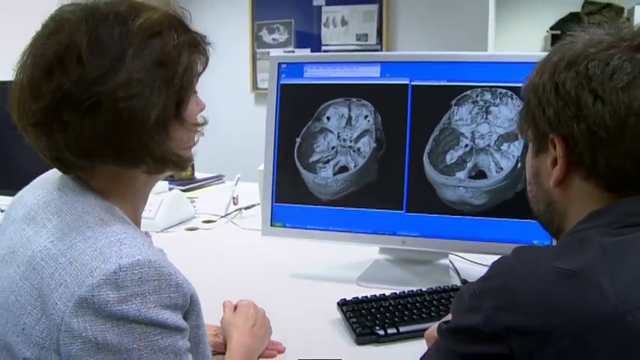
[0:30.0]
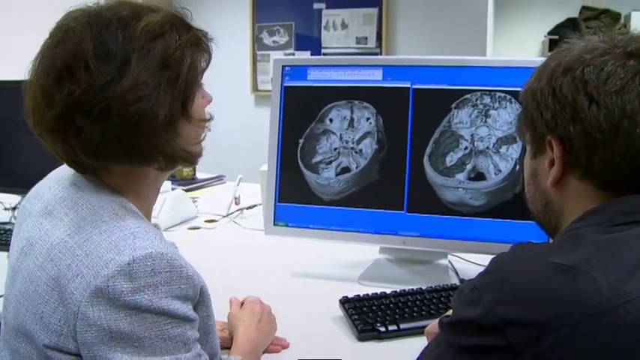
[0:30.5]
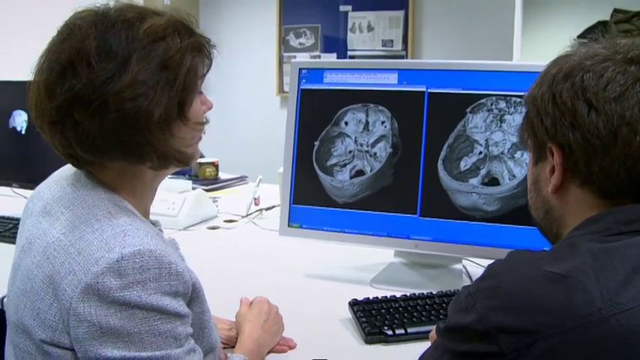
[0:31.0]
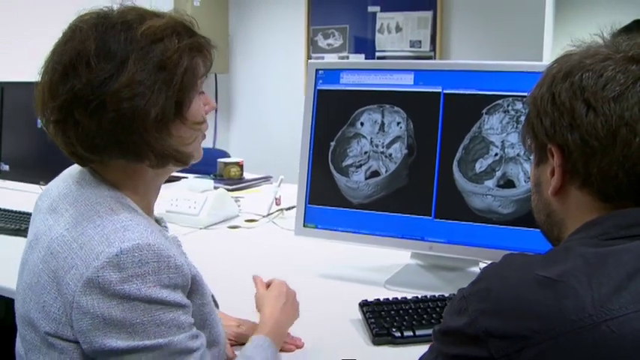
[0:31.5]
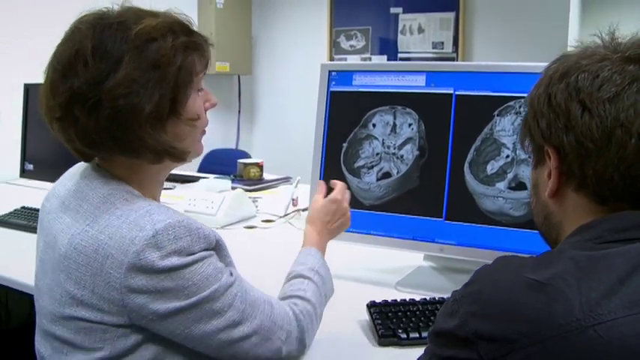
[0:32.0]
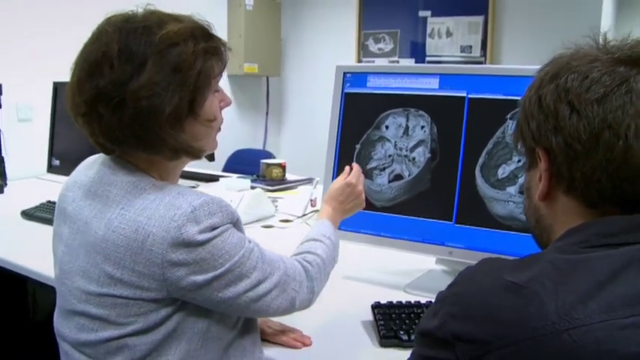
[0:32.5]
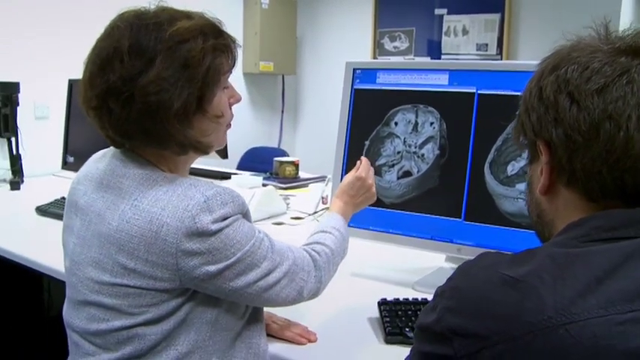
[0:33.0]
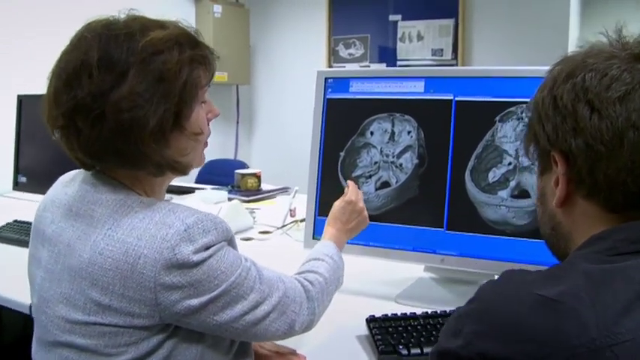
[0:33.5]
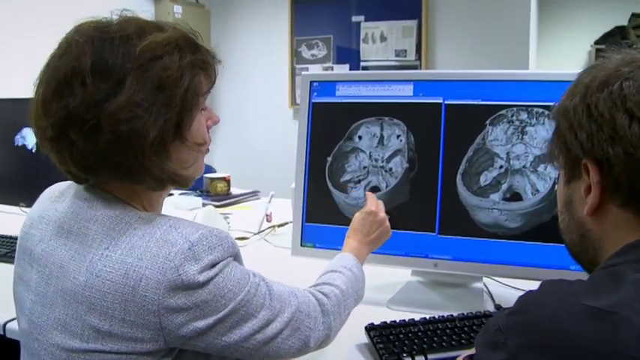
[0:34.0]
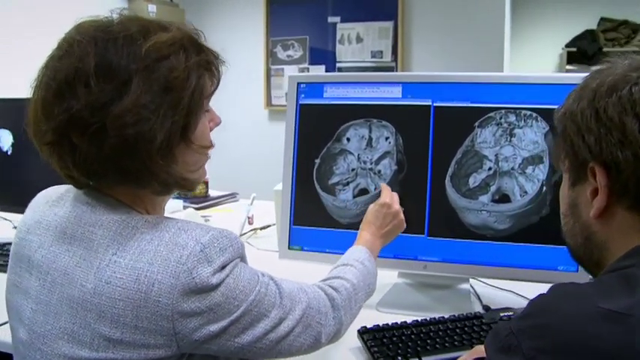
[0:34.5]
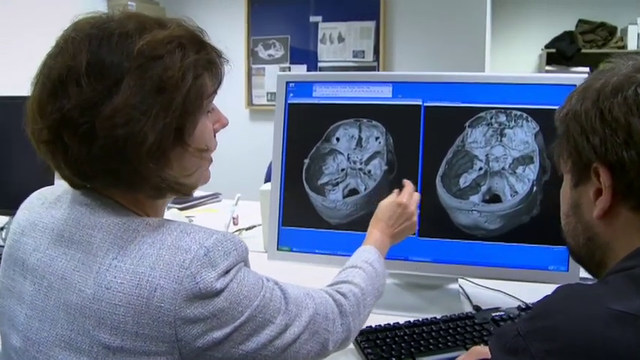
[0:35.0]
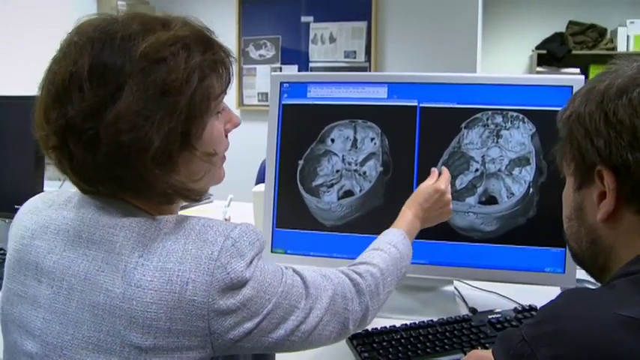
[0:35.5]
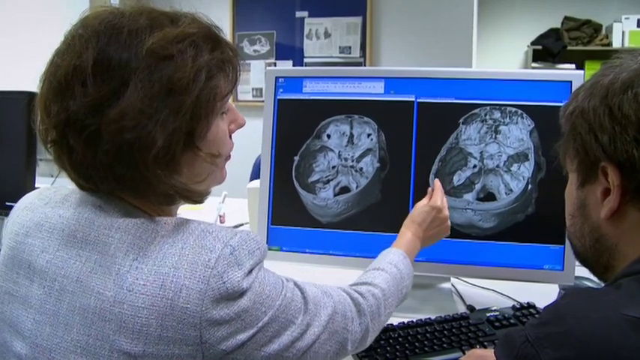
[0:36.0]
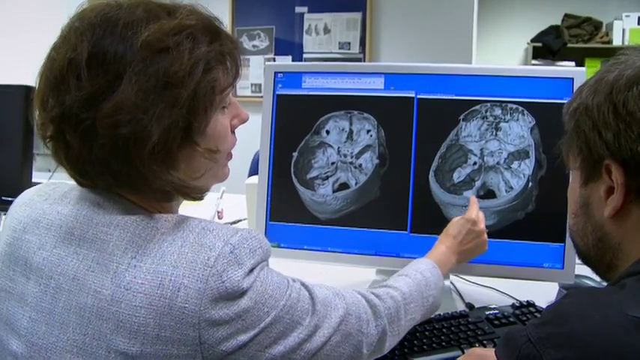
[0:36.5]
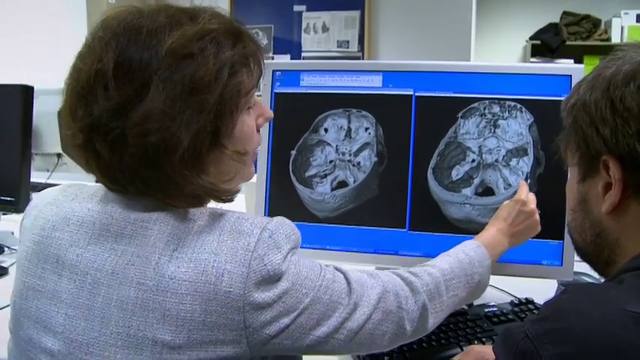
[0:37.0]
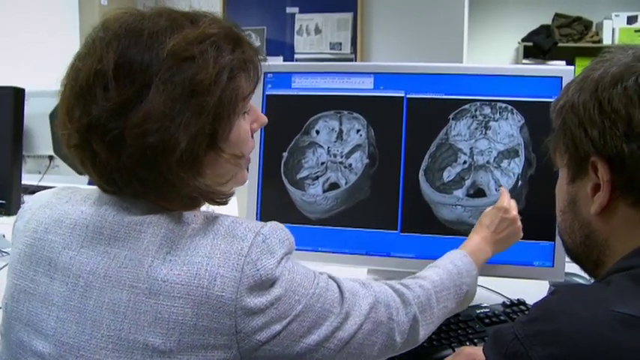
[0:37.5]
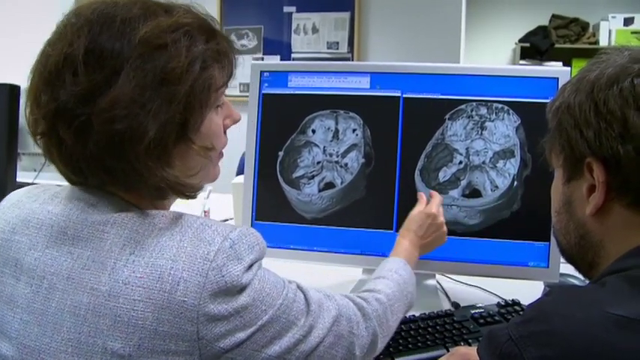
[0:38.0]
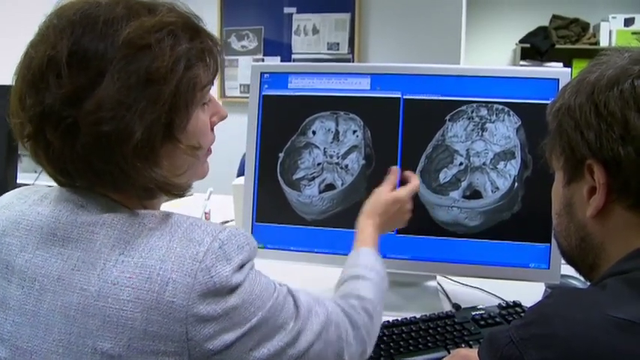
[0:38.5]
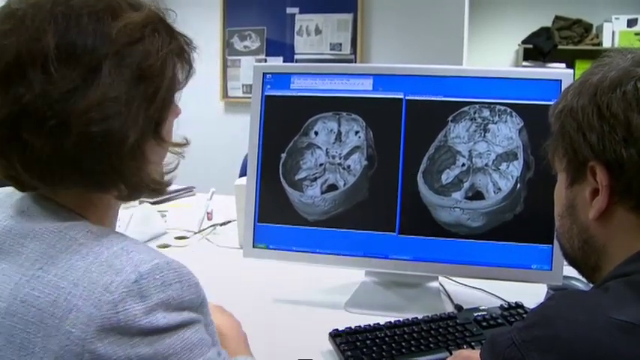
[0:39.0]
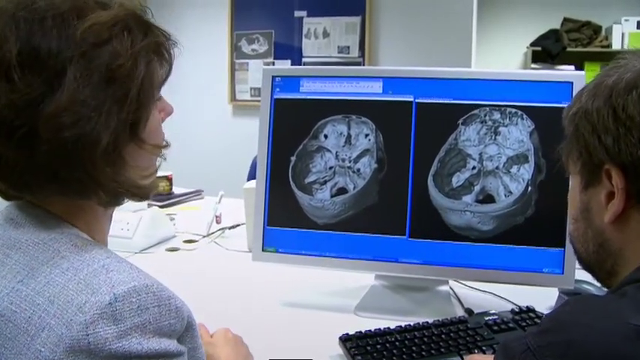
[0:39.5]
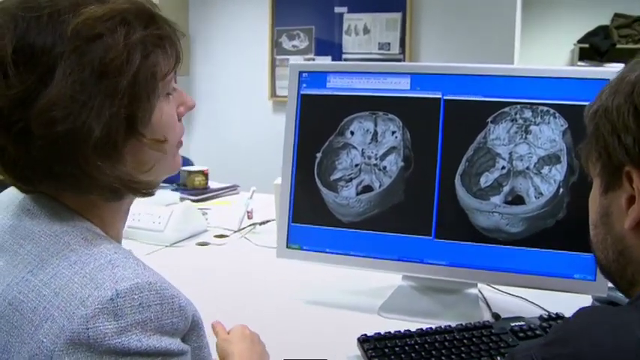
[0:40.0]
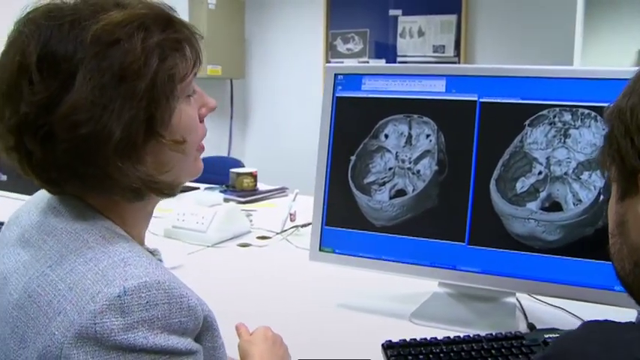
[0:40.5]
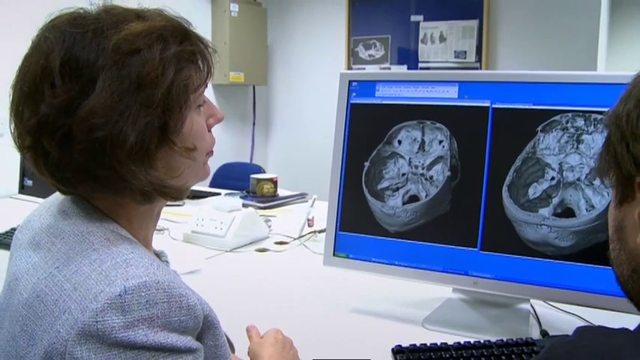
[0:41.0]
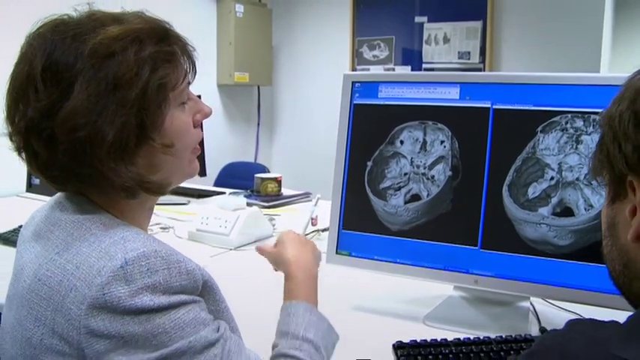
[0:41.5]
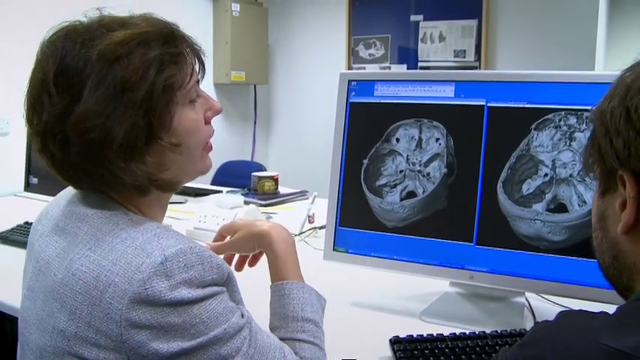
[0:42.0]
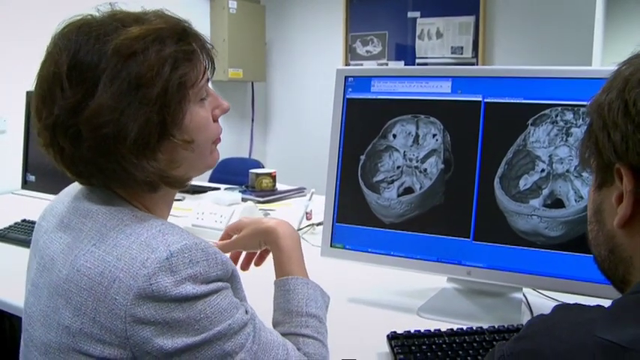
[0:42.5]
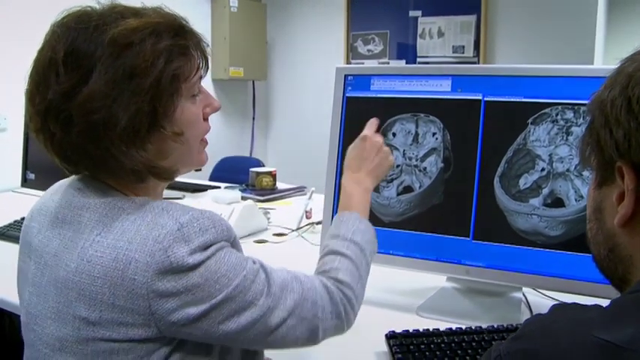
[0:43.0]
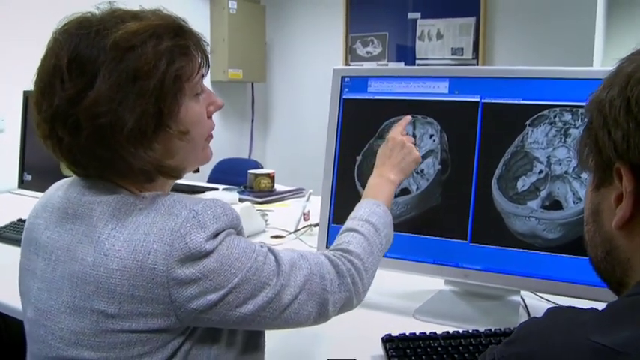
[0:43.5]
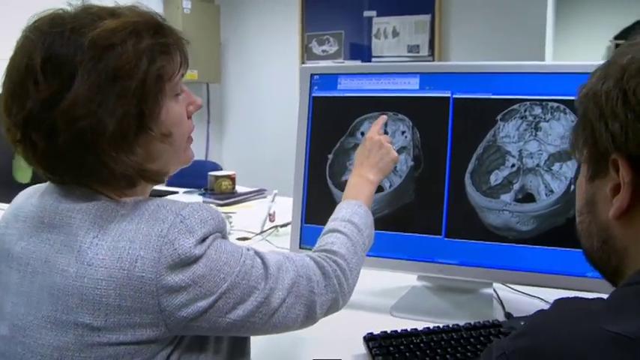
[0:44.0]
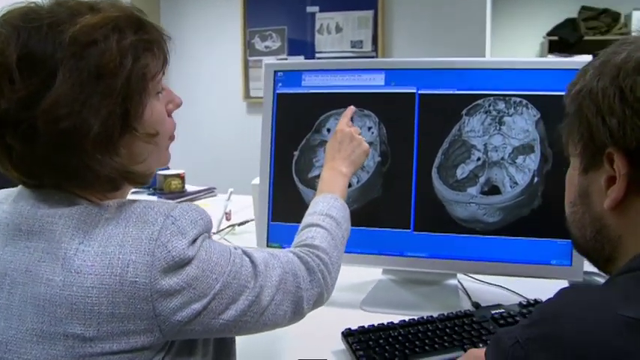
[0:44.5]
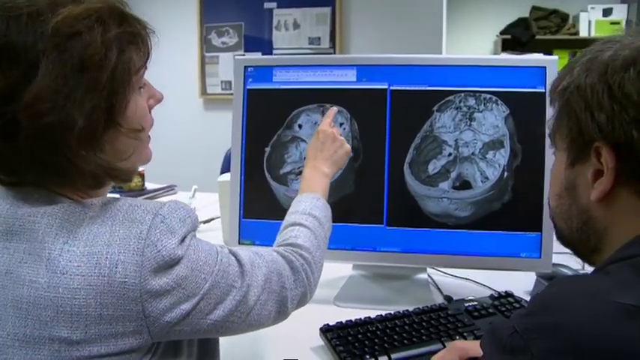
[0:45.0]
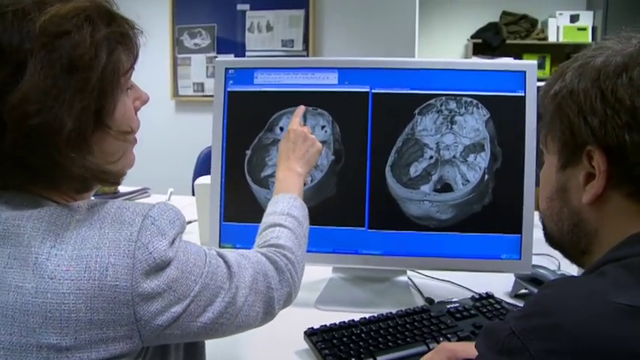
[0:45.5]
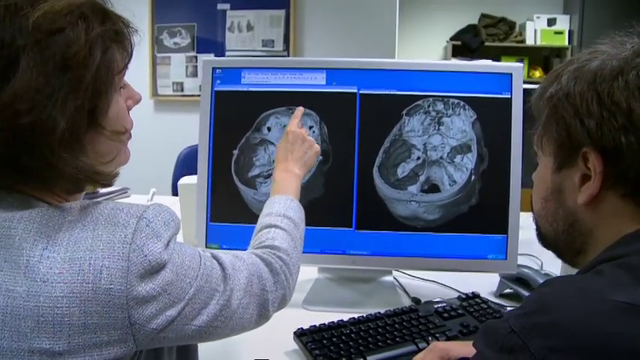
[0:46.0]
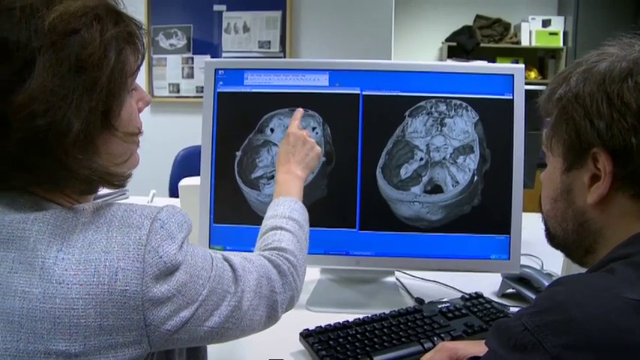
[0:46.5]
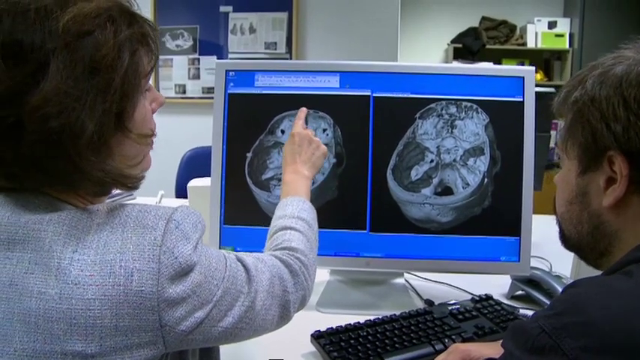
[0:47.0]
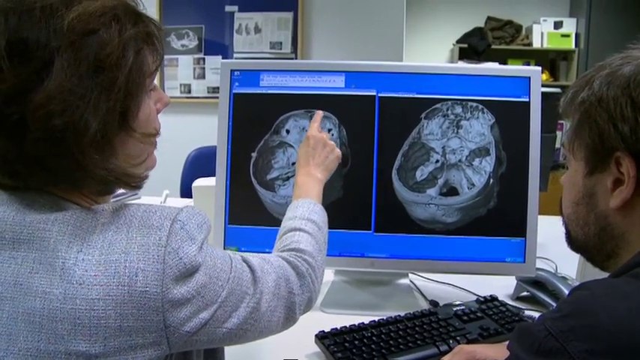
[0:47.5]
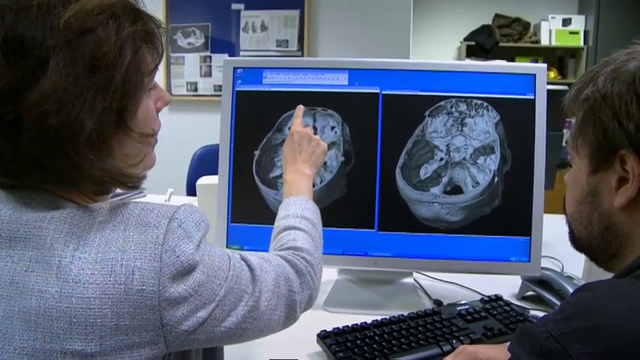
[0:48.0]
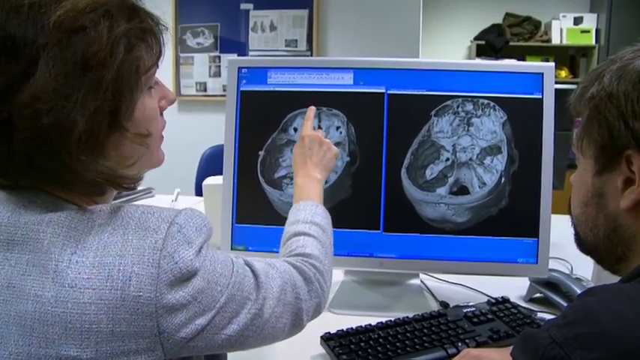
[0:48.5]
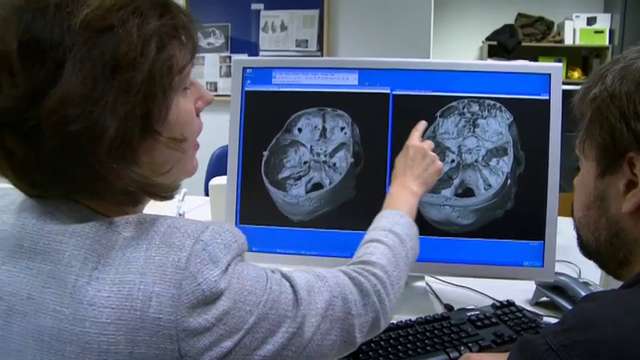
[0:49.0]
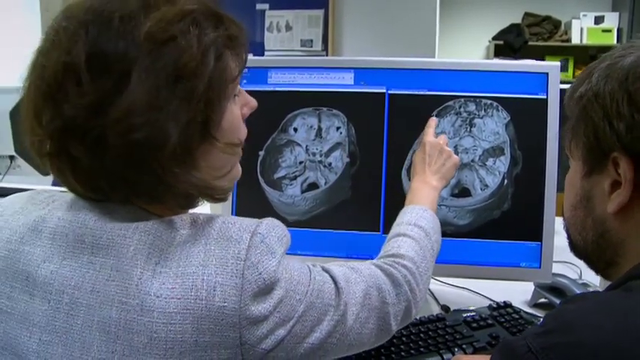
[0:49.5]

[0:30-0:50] The two people are still looking at the 3D images on the computer screen. The woman traces the shapes on the left side and the right side with her fingers as the man looks at her. She then points to the top, appearing to compare the images as she points to the top left side of one and then to the top left side of the other. The computer screen shows a blue background with two square images side by side that look very similar to one another. Both people are looking at the screen the entire time. On the wall in the background there is what almost looks like a bulletin board or a picture hanging up, and a couple more computers are to the left of the two people.